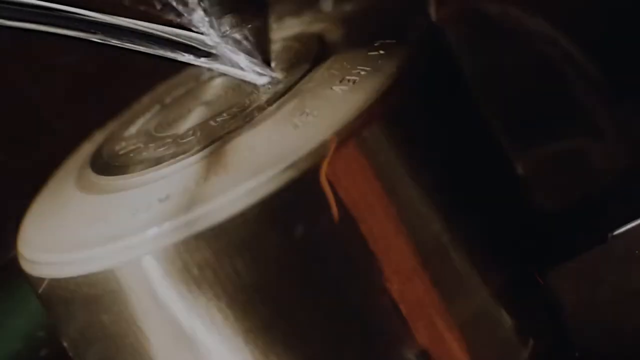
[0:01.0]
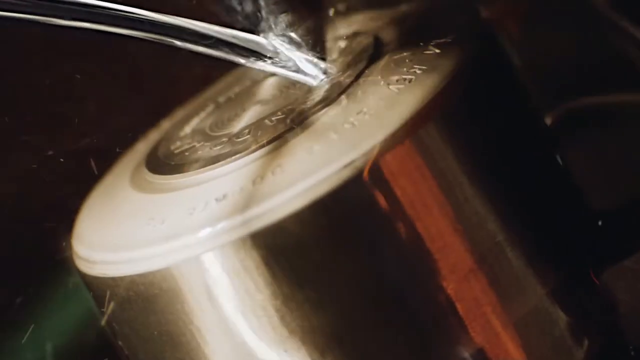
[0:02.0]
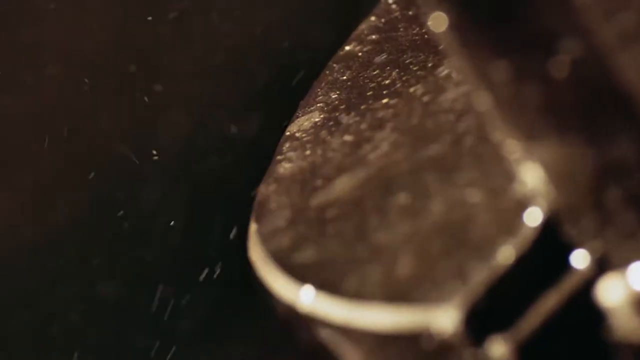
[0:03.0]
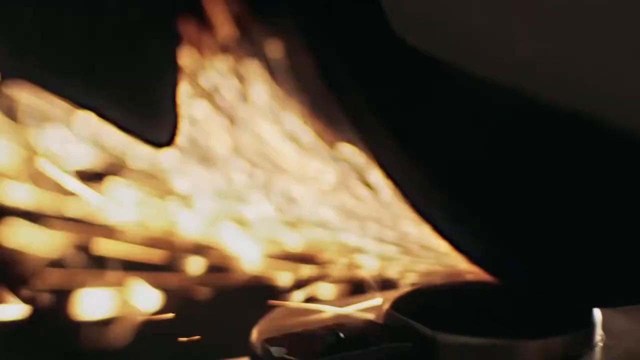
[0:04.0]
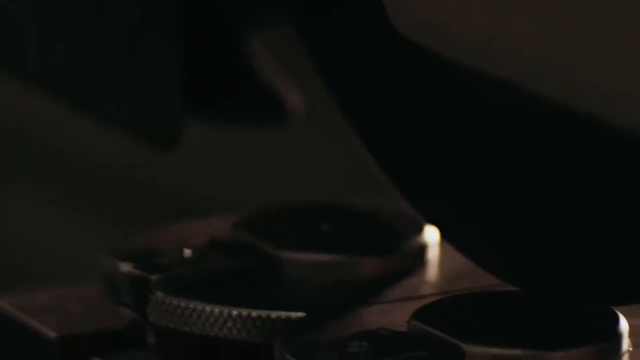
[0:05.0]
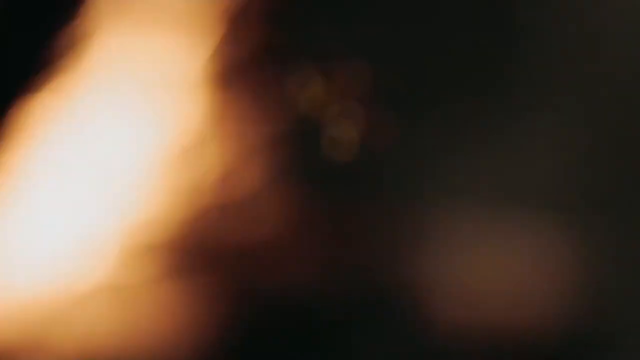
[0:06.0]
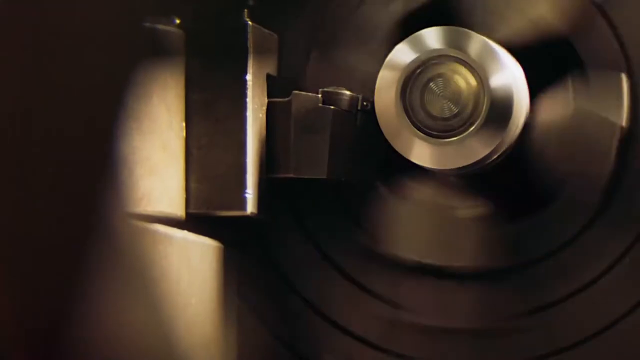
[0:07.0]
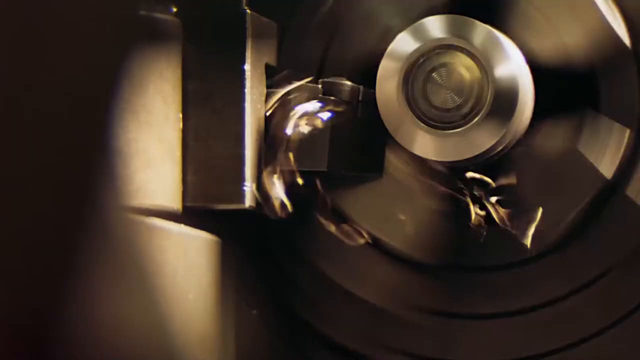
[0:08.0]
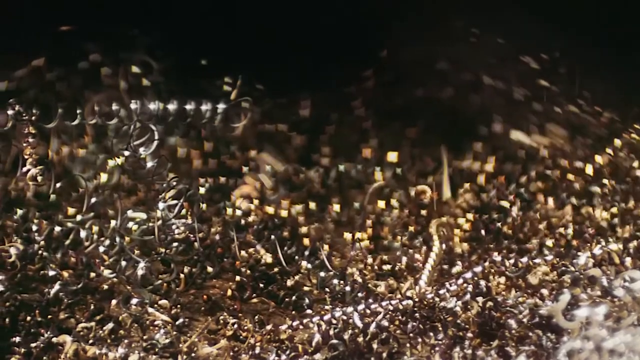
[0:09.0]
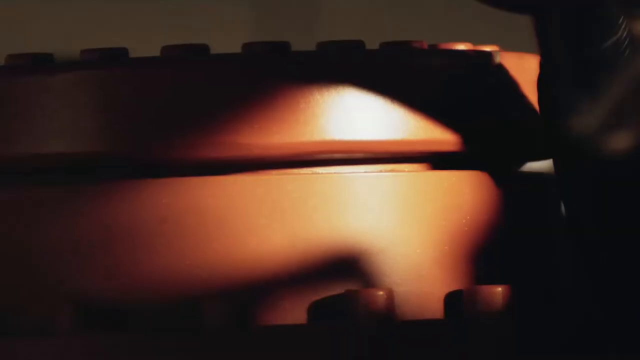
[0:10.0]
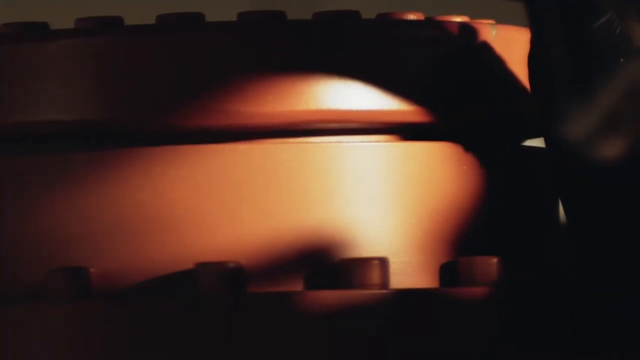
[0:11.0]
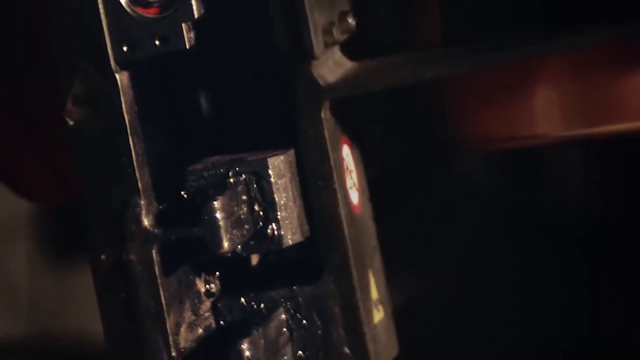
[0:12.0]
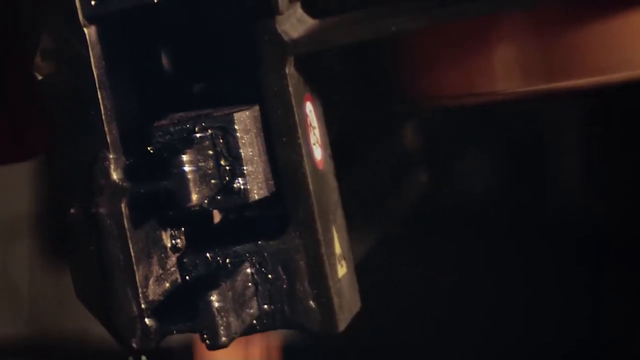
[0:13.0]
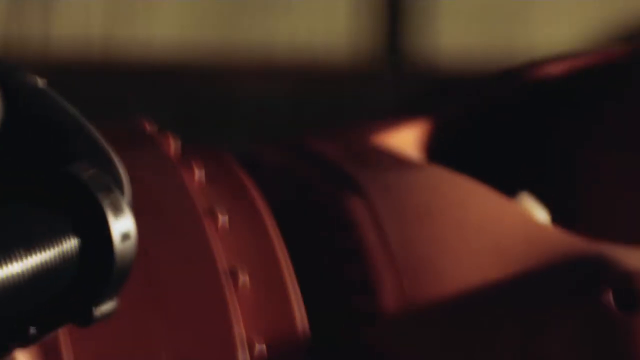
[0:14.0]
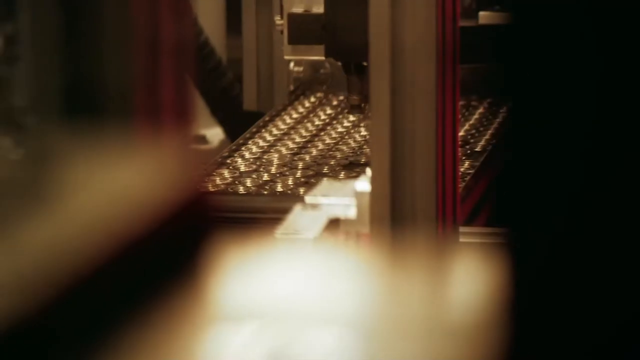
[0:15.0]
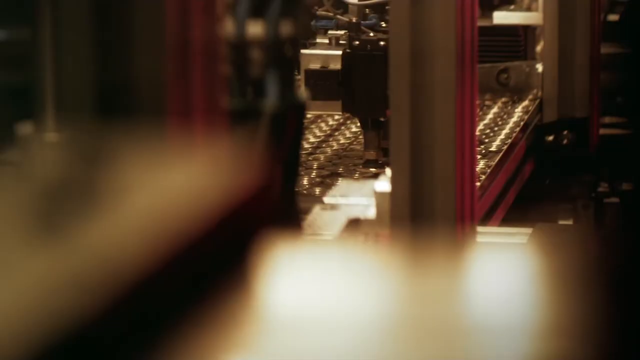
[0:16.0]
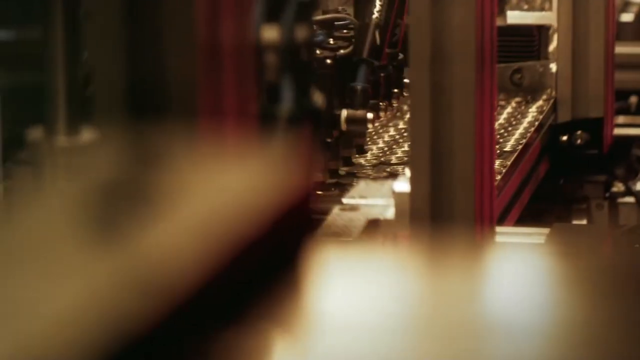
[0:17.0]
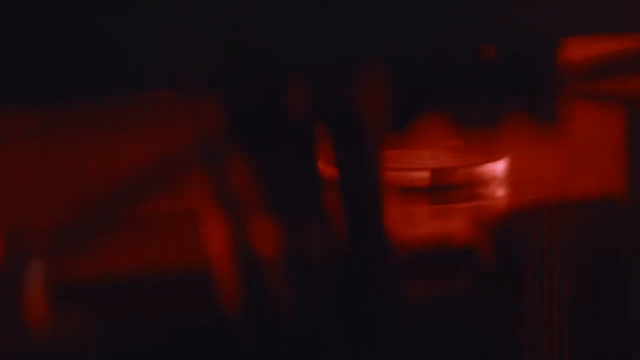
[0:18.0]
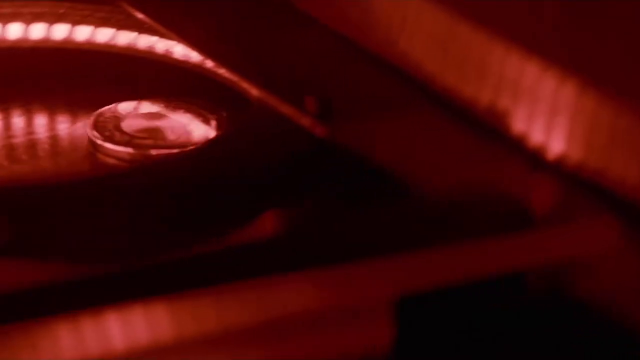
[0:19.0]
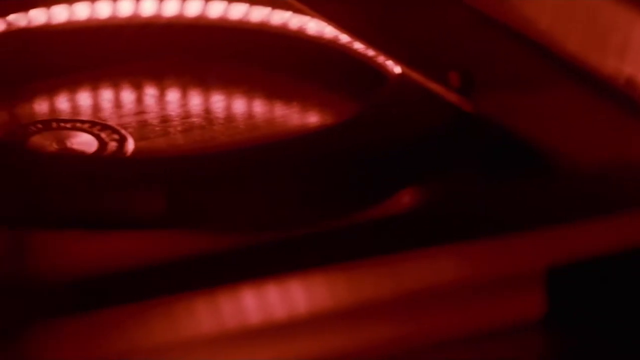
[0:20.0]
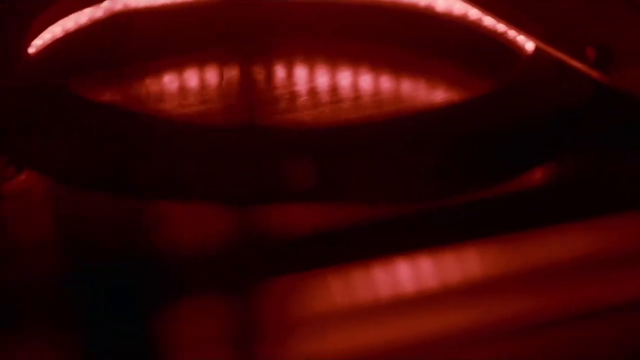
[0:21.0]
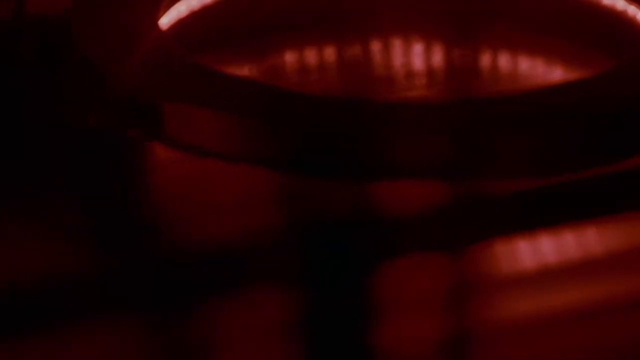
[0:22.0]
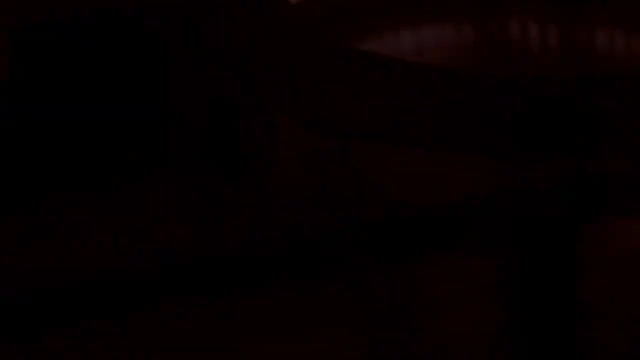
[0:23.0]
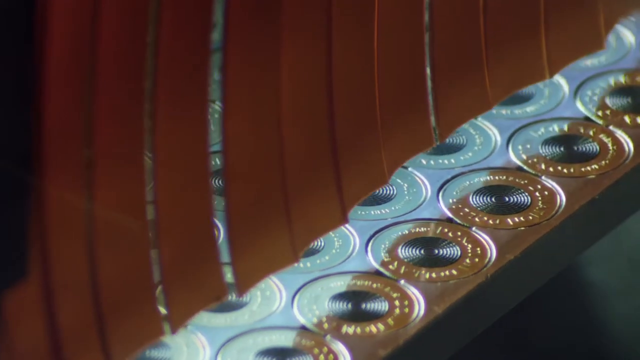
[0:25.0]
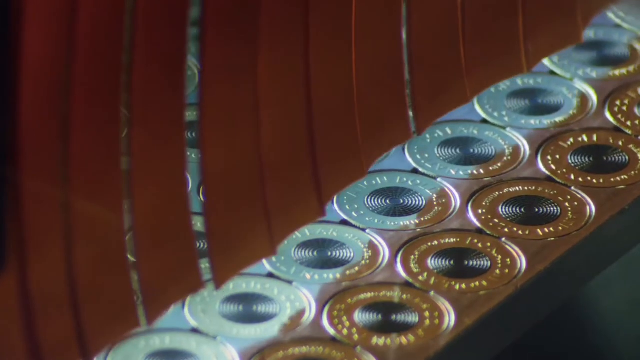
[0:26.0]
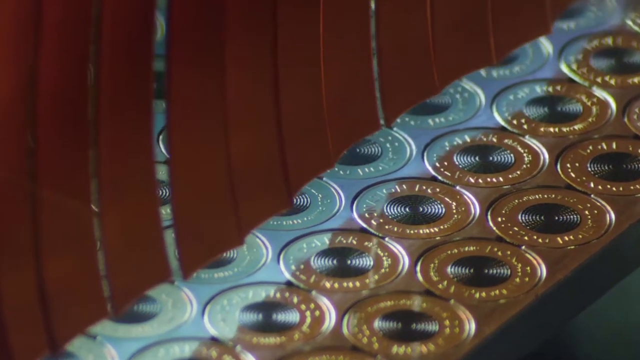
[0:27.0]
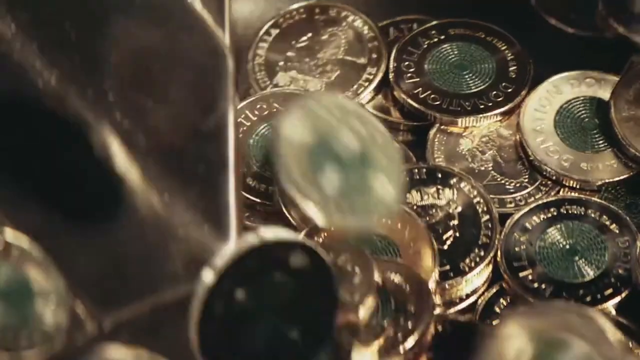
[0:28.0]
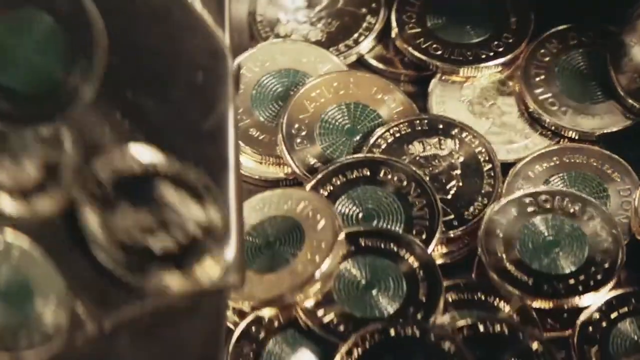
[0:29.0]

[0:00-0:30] Some kind of drilling on metal is shown, then what looks like a saw making something smooth, with metal shavings hitting the floor. Lights shine on some kind of metal, and the view moves out and in. Something that looks like a coin is made and travels down a red hallway that is lit up. The coin has a kind of black edge and metal in the middle, and it travels down into a black place. A stream of the coins follows, and the ring around each coin is gold, while the middle has silver parts with circular parts in the middle. The coins drop down into some kind of vat.